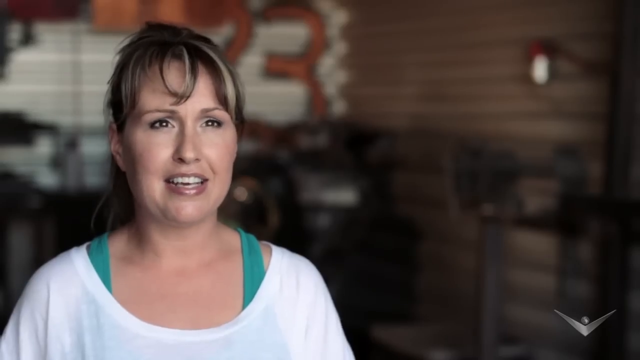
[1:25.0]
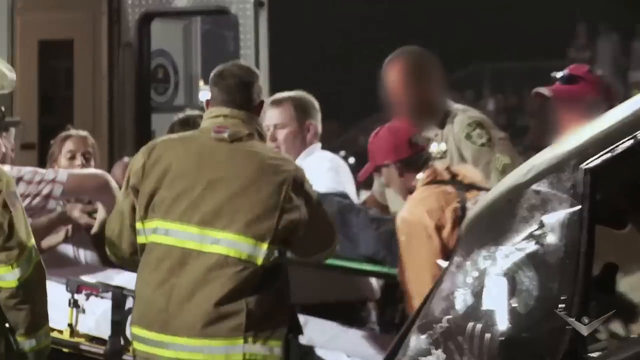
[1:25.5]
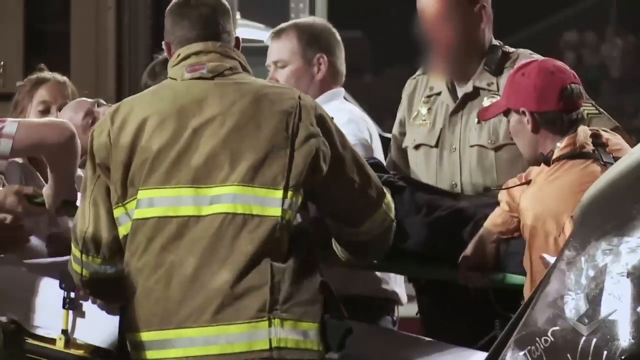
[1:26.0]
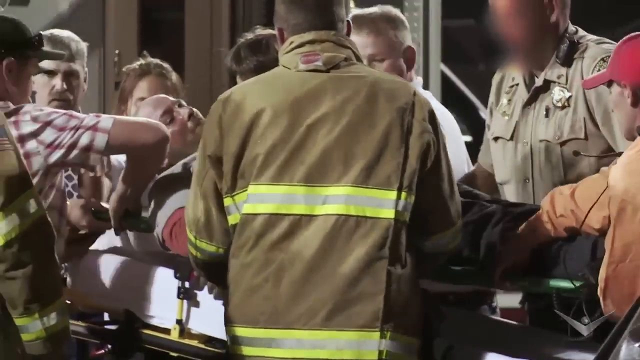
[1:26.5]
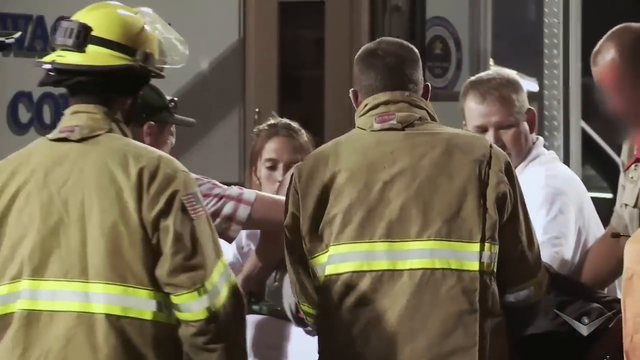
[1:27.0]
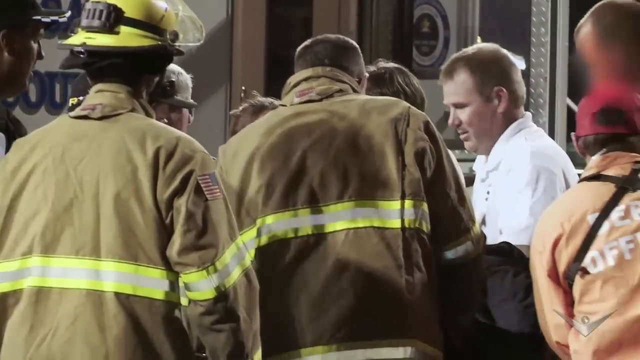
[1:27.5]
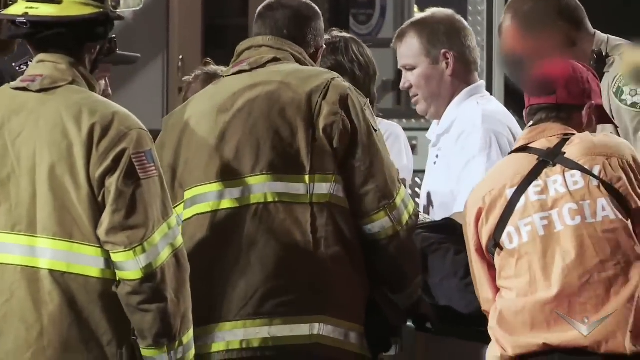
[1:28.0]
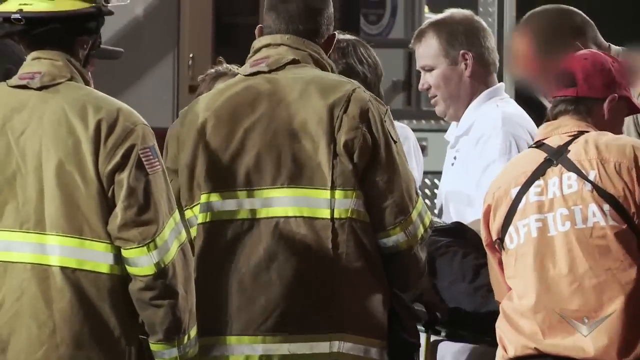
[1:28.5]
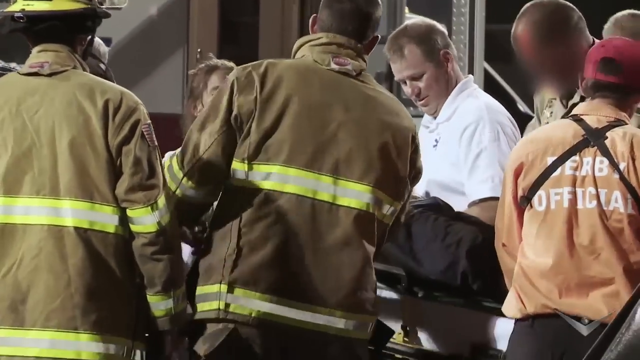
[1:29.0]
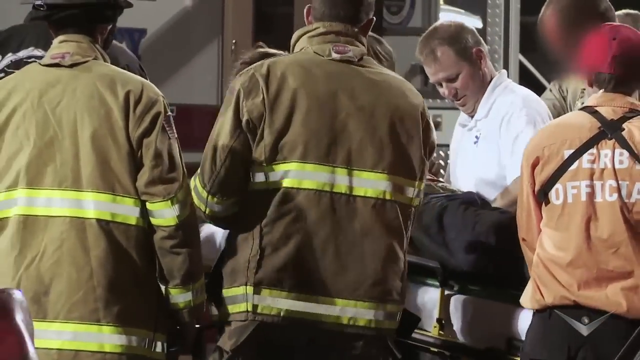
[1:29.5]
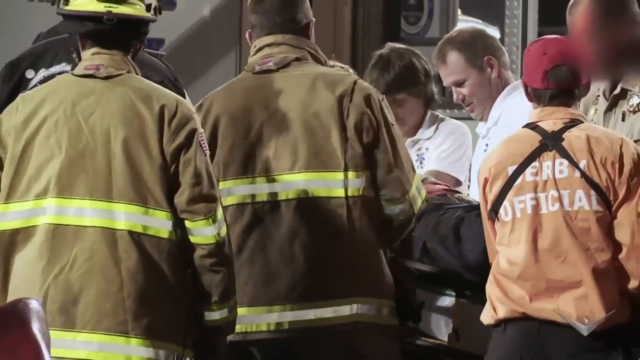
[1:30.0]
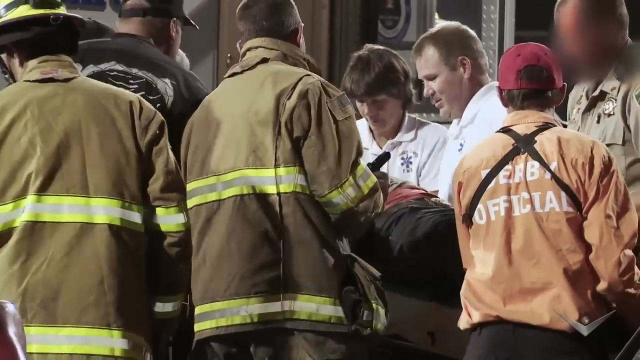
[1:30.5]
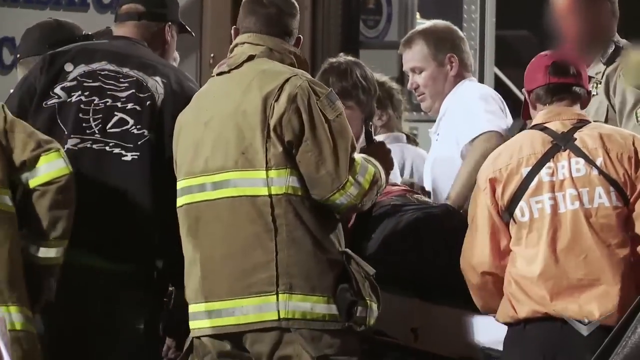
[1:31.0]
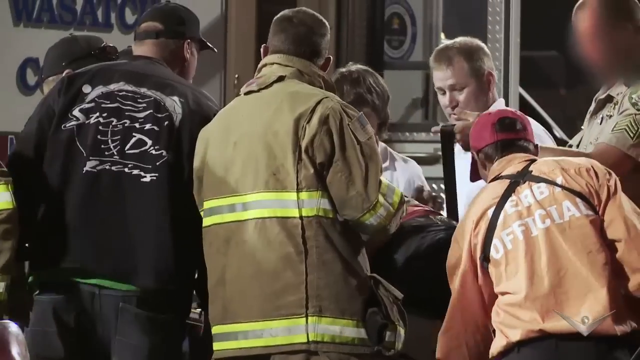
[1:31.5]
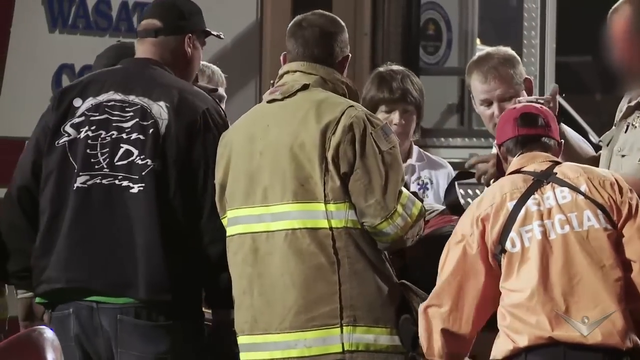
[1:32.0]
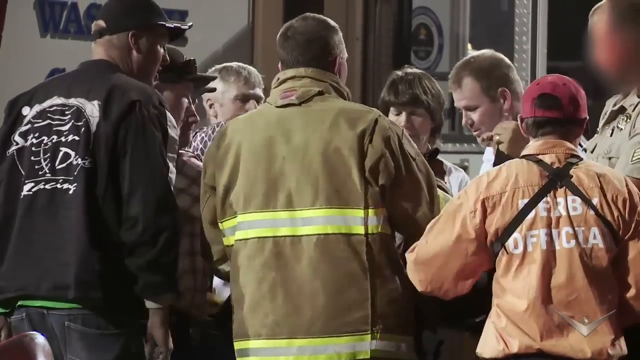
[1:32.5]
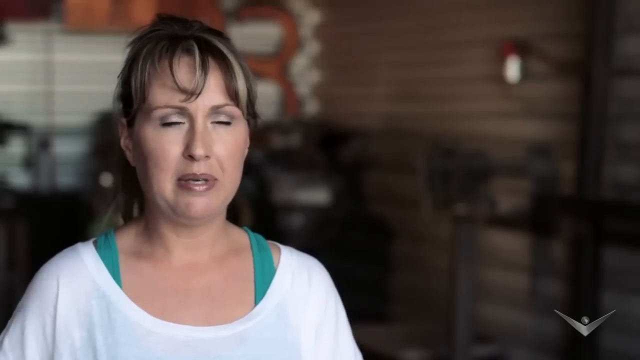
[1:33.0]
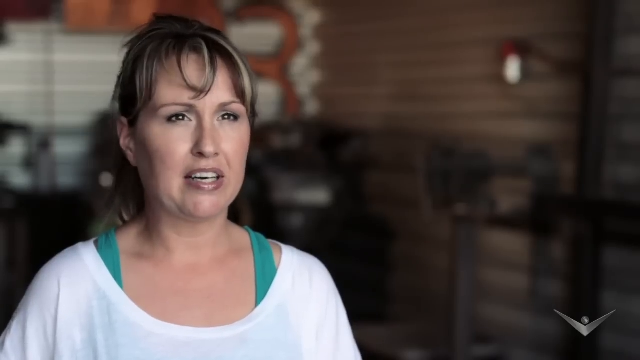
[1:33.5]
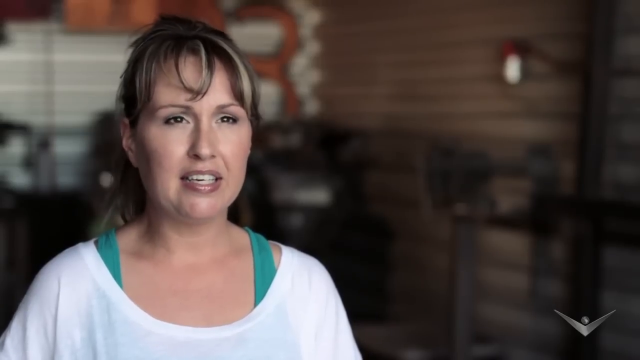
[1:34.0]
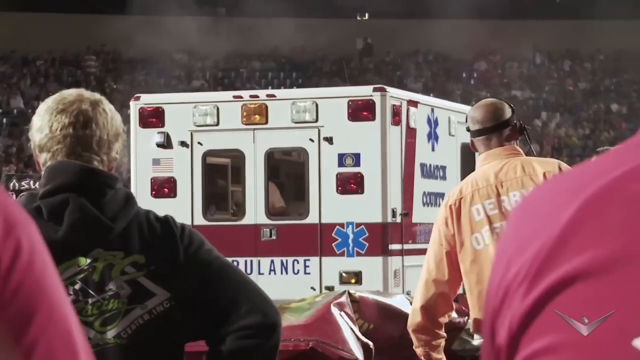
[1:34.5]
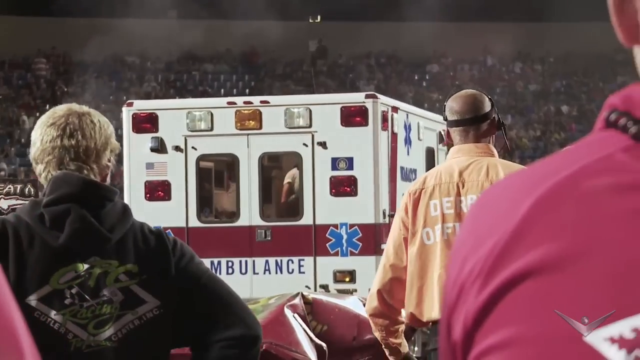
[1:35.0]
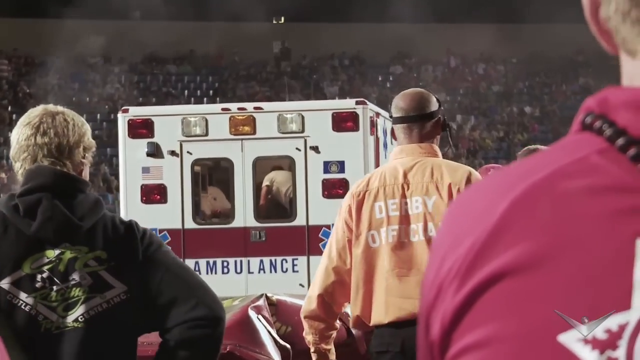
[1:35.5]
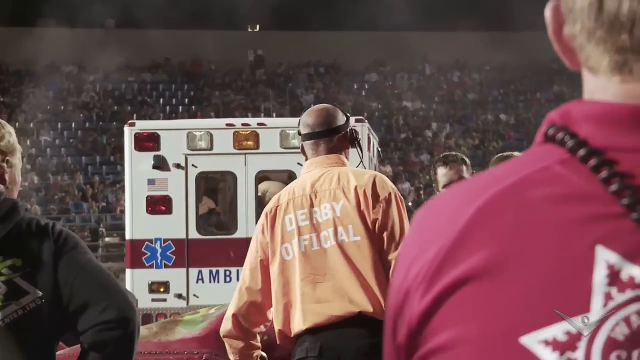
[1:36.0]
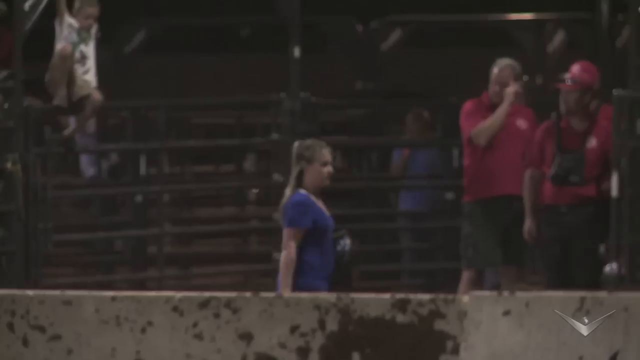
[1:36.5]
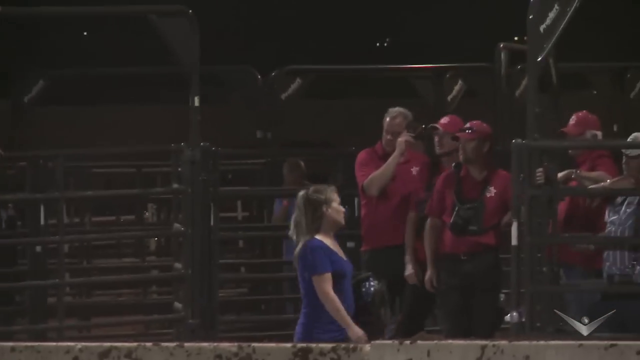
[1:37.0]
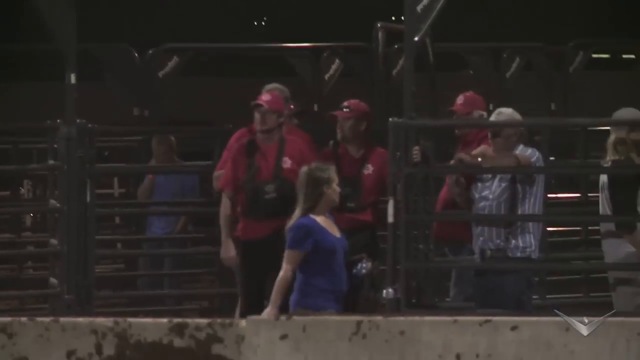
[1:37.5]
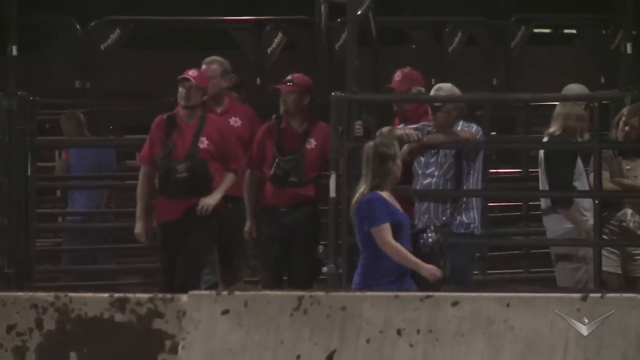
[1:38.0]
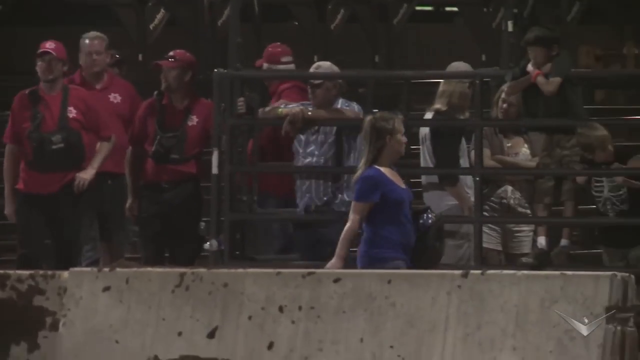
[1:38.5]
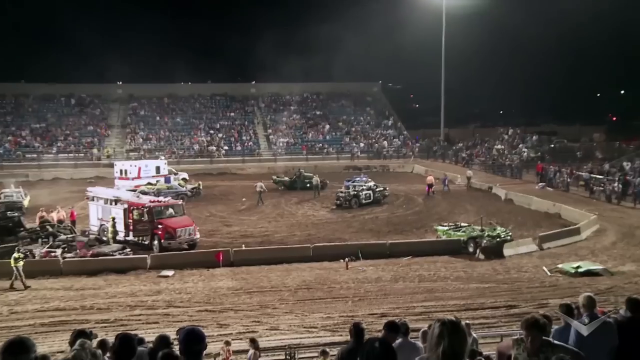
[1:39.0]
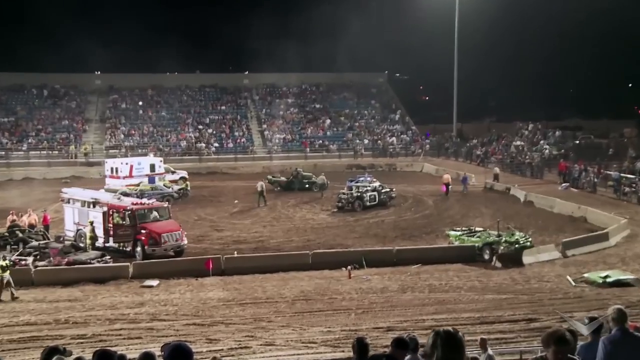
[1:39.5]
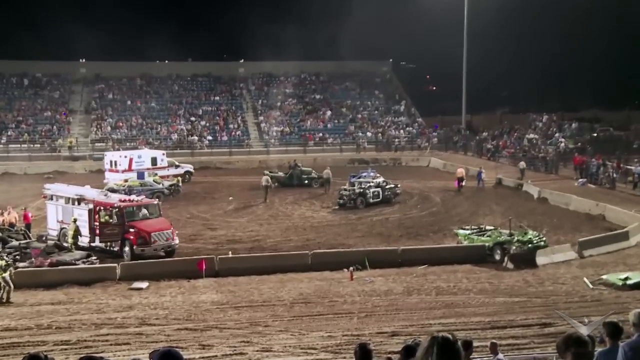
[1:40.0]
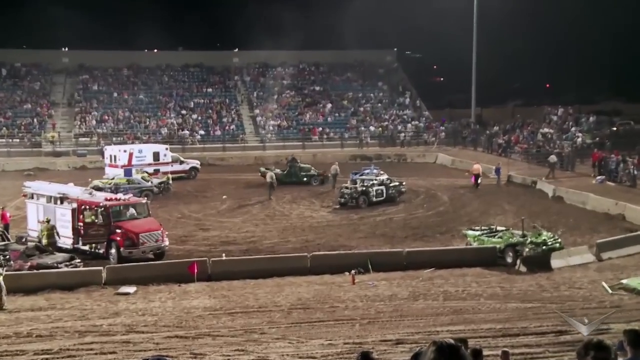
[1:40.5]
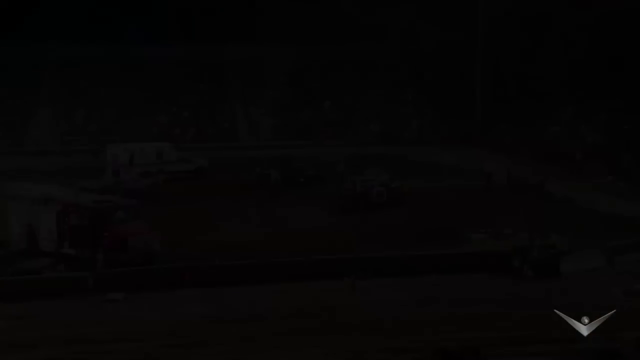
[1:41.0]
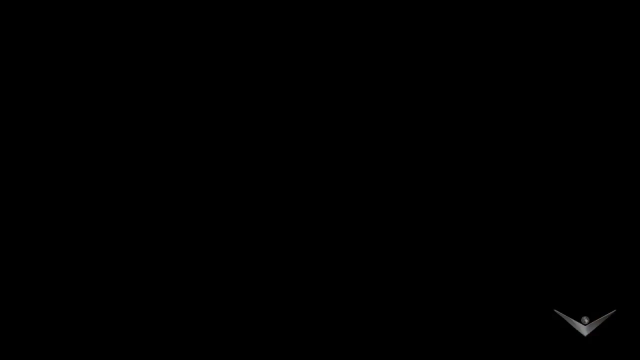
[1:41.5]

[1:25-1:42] The aftermath shows the driver who was hit being carried out on a stretcher. A white woman speaks to the camera; she looks to have brown hair with some blonde highlights. Then a blonde woman in a blue shirt and blue jeans, very clearly emotional and apparently a partner or family member of the driver, walks away back into the crowd. The driver looks to be getting checked on the gurney by firefighters and EMTs, and they load him into the ambulance and take him away while the crowd looks on. The crowd looks to be several hundred, possibly thousands of people, with the whole stadium full. The crowd does not look super somber, and the driver looks to be somewhat fine as he is taken away in the ambulance.